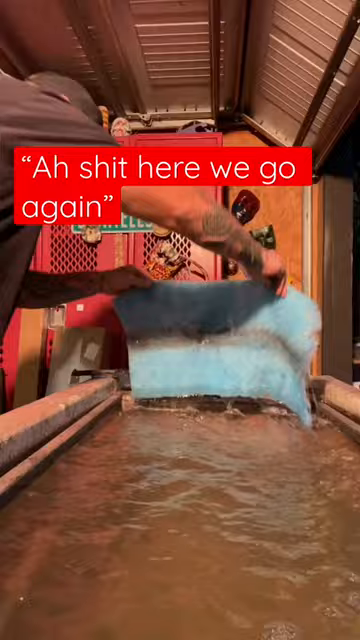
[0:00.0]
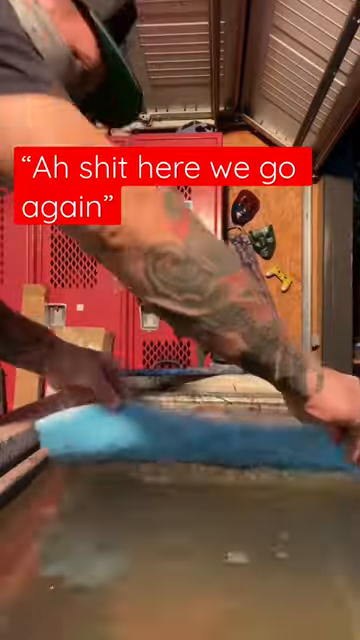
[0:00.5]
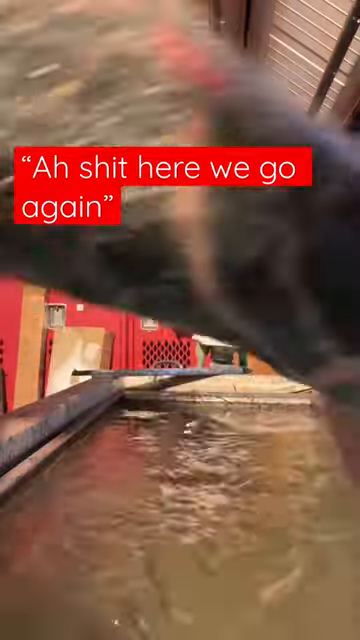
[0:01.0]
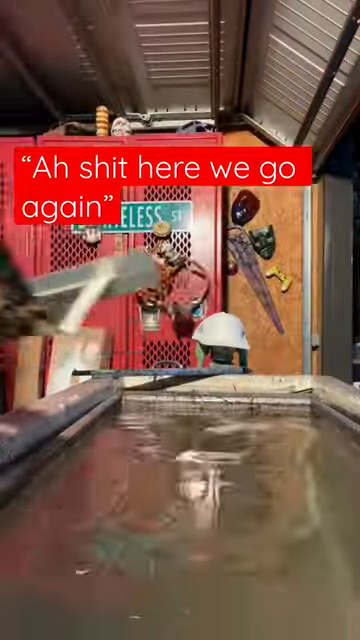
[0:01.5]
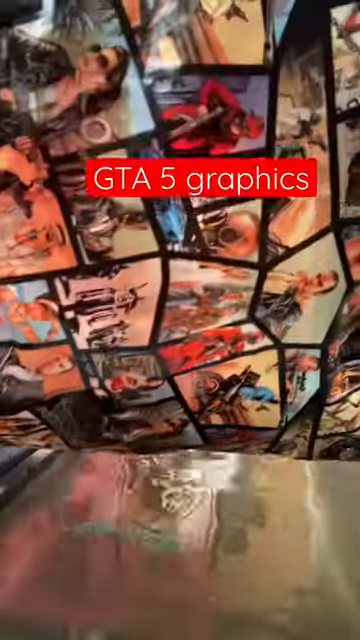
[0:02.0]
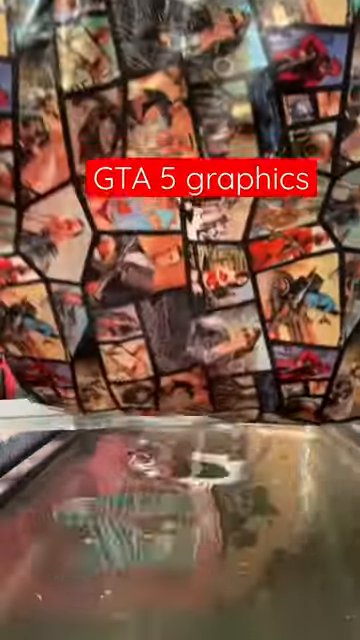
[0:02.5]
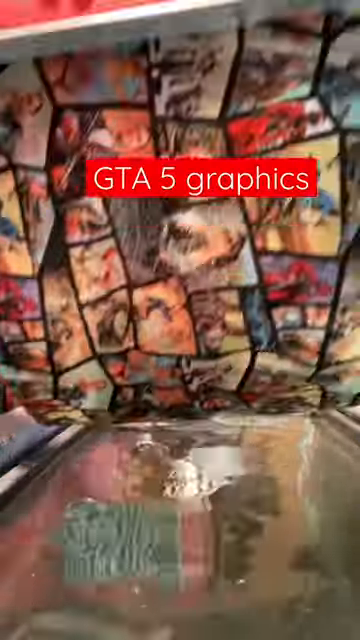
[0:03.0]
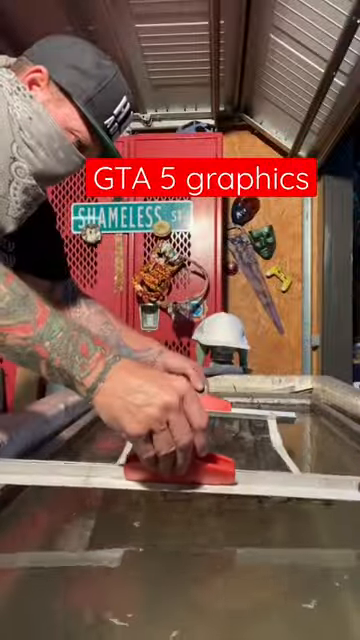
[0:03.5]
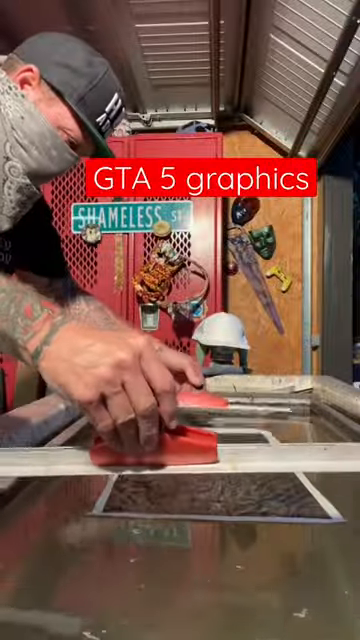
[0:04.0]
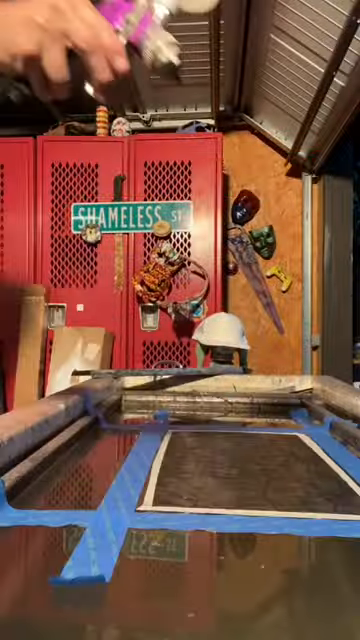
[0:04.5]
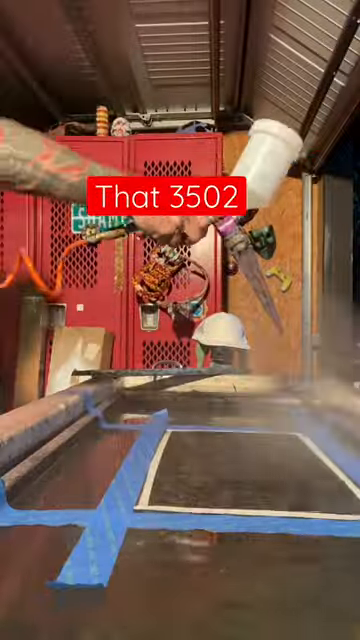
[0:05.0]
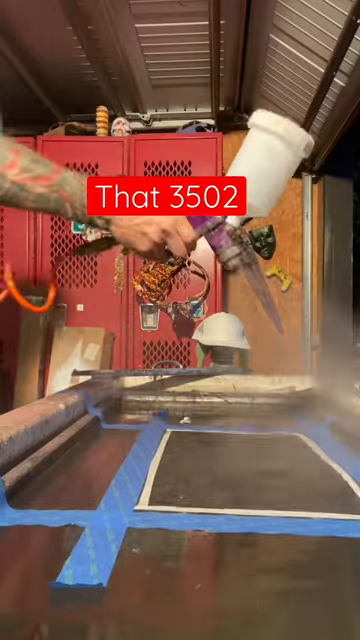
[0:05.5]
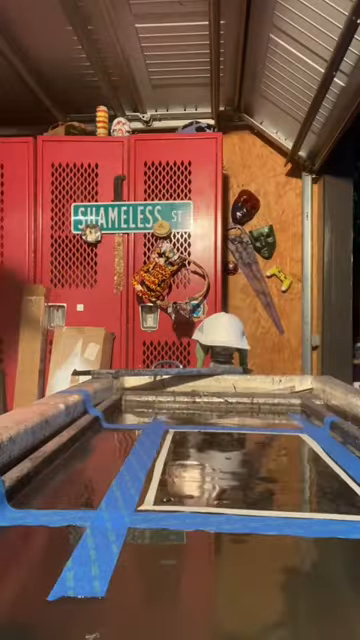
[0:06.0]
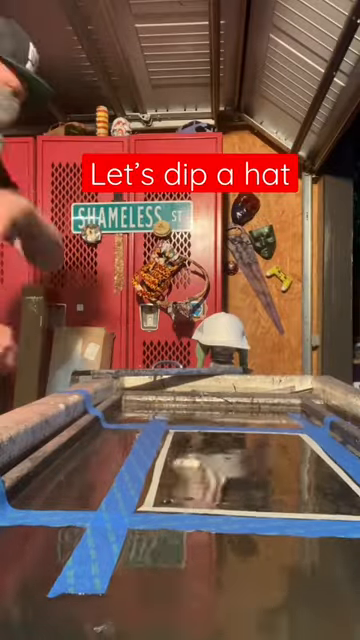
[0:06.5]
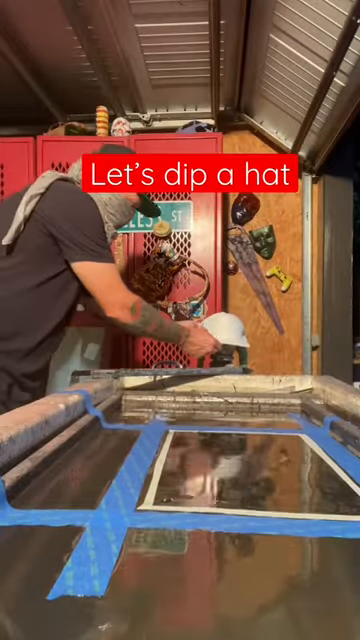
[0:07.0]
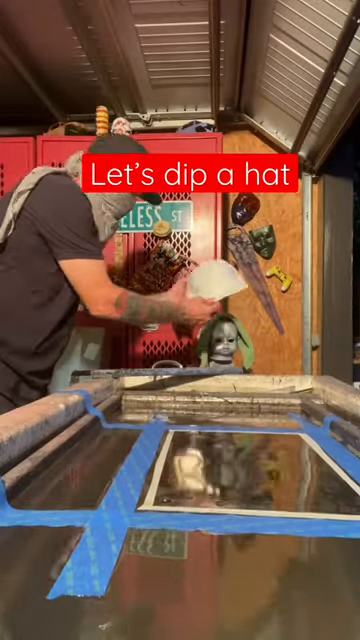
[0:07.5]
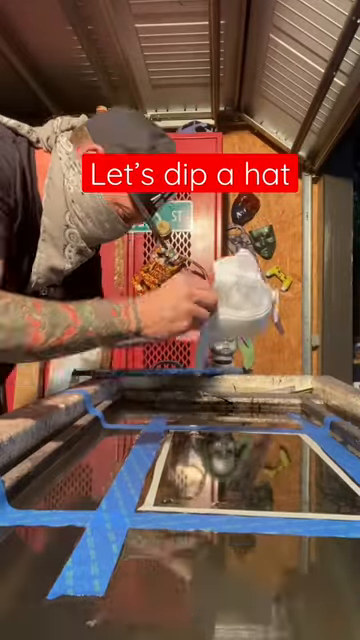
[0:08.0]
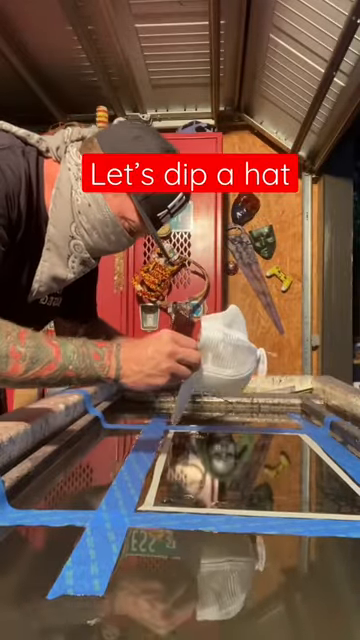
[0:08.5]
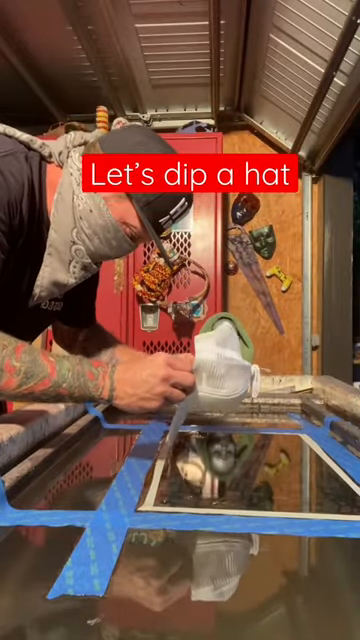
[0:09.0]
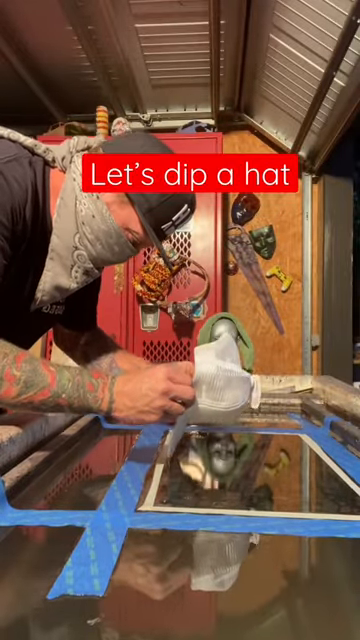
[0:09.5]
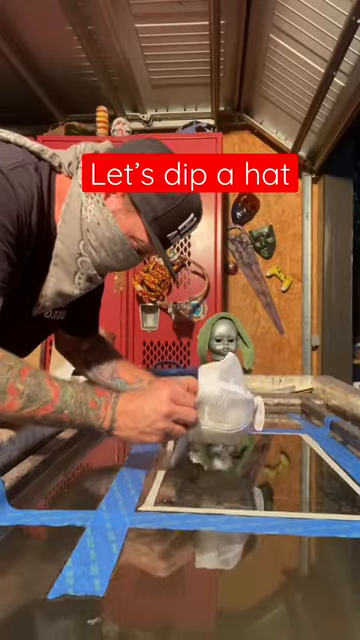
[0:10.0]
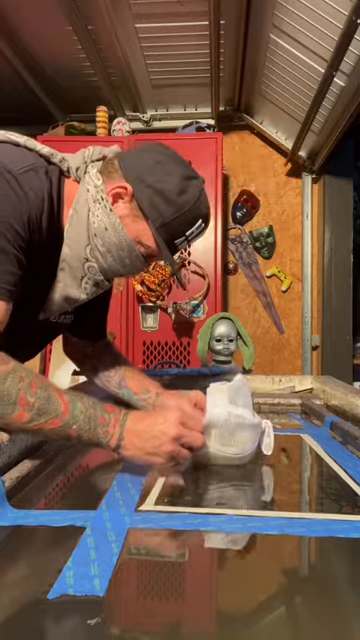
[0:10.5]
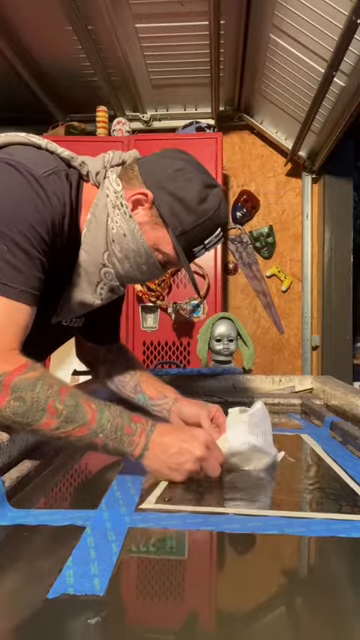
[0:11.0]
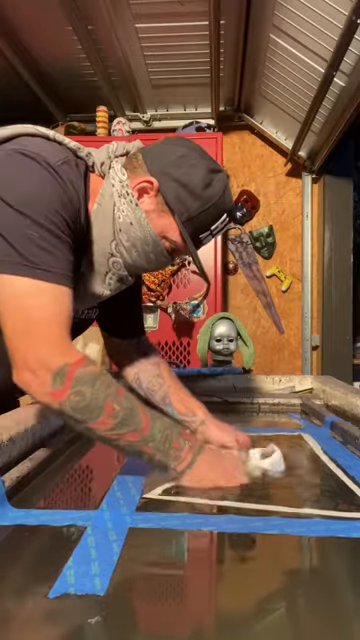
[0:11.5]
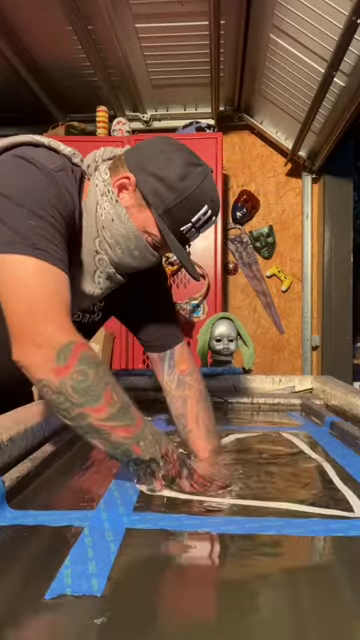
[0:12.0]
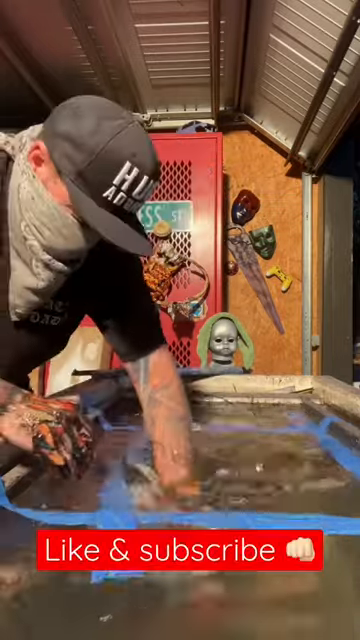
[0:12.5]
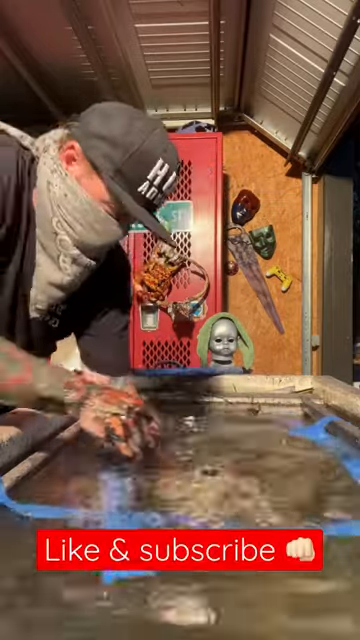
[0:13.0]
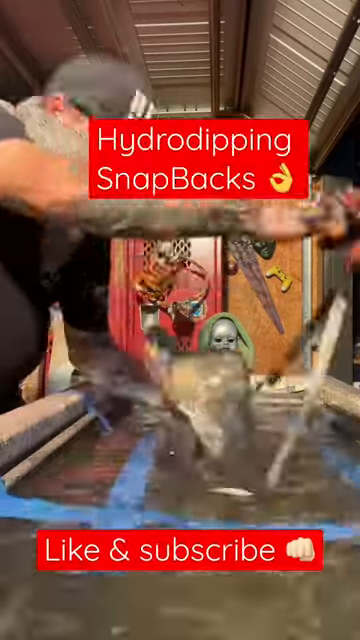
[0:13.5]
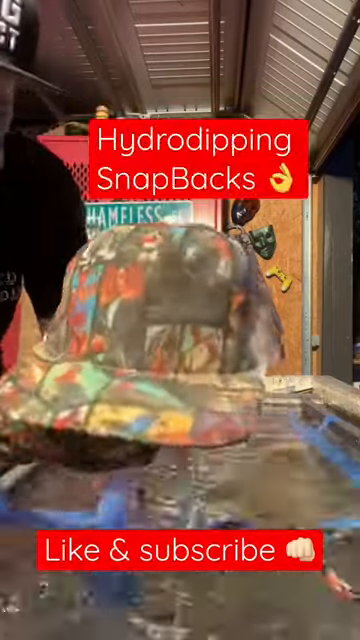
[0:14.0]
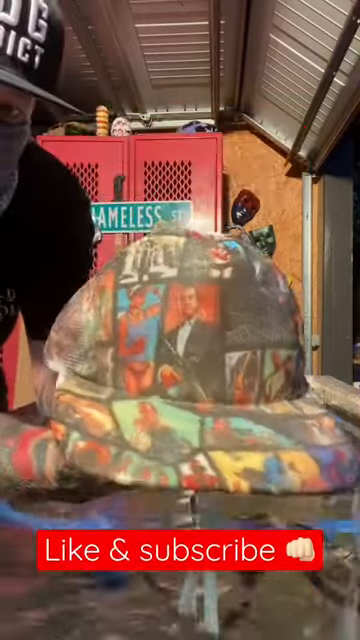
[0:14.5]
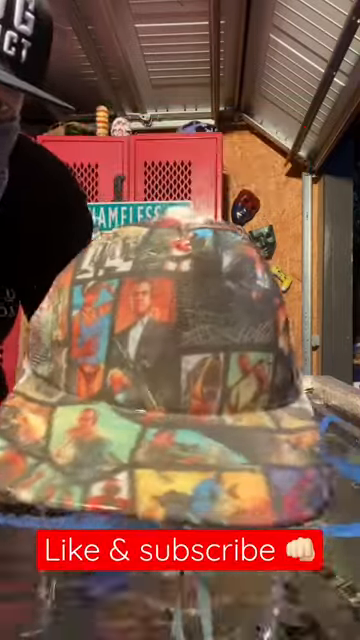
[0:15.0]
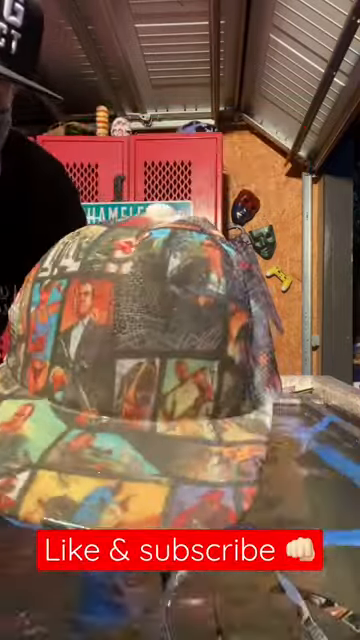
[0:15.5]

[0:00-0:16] An individual has a poster. Toward the top of the screen is a label in white text on an orangish-red background that reads "GTA 5 graphics," and there appears to be water down below. The person is shown on the left-hand side, wearing a gray bandana around the face and a black hat with white letters; the person has tattoos, and both hands are shown. Two long gray tools are placed on the edge of the area he is working in. The individual uses a sprayer to spray the top edge. There appears to be blue tape marking off different areas within his workspace: two horizontal lines of tape and two vertical lines of tape. The water sits for a moment, and then text appears up above that says "let's dip a hat." The person takes a hat off a holder at the back of his workspace, dips the brim and then the whole hat into the liquid, and swirls it around. The hat now has many of the different graphics from the original poster on it.